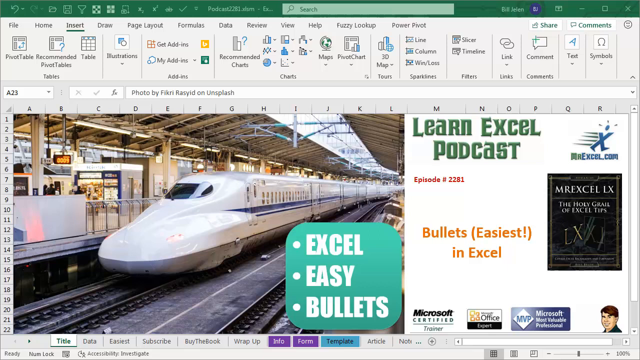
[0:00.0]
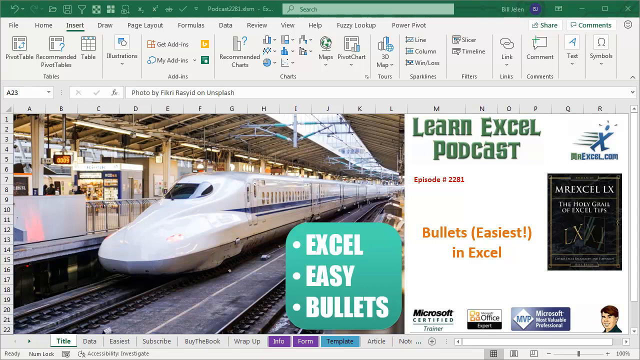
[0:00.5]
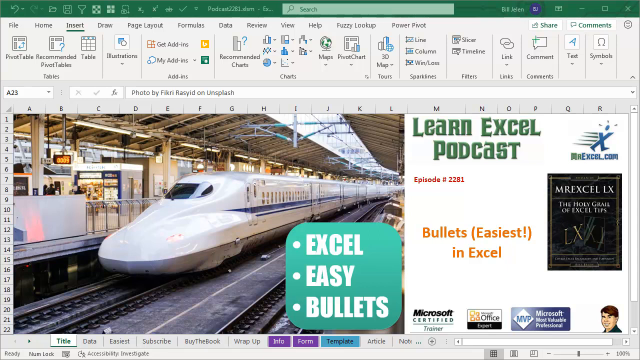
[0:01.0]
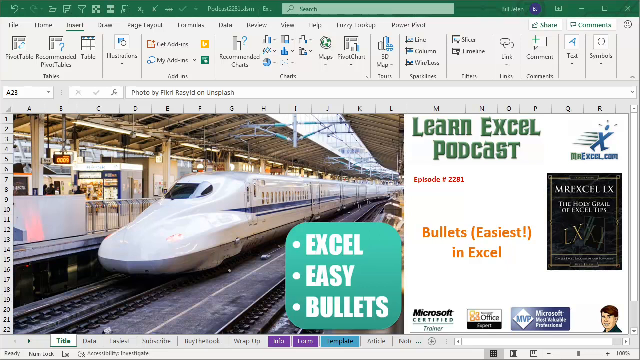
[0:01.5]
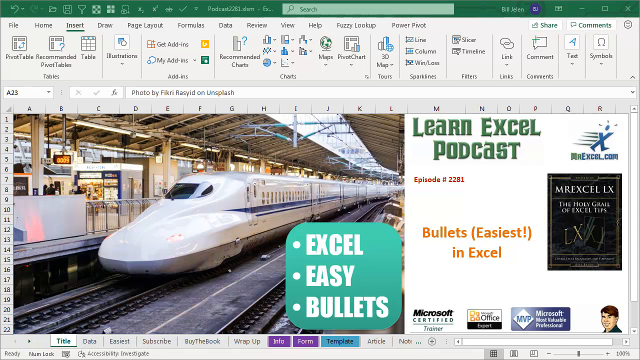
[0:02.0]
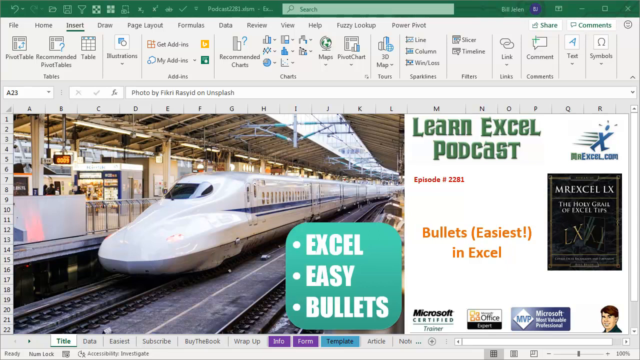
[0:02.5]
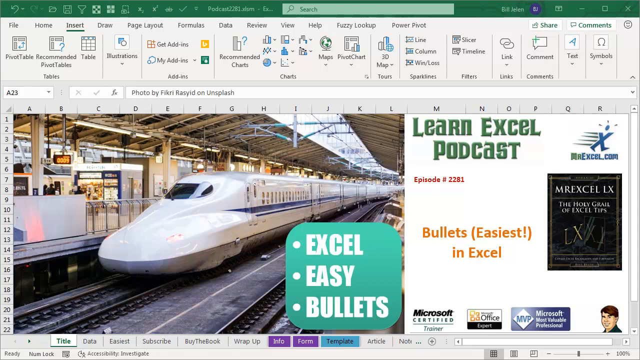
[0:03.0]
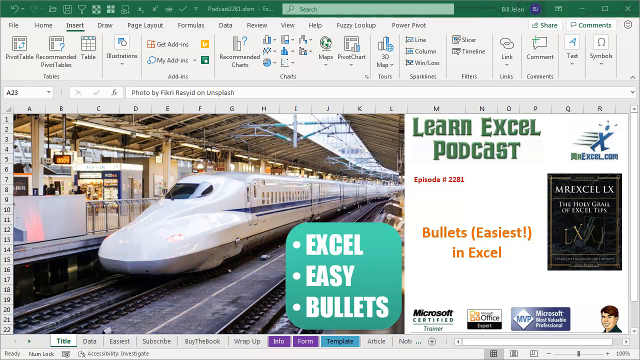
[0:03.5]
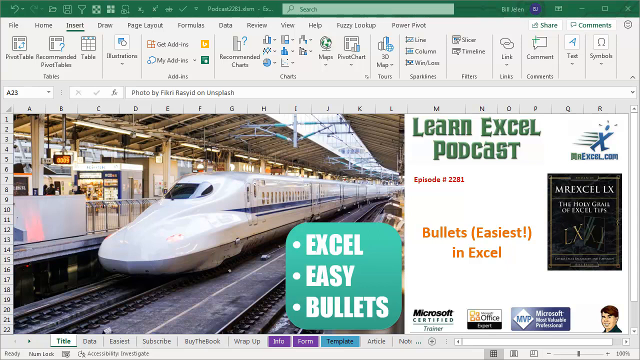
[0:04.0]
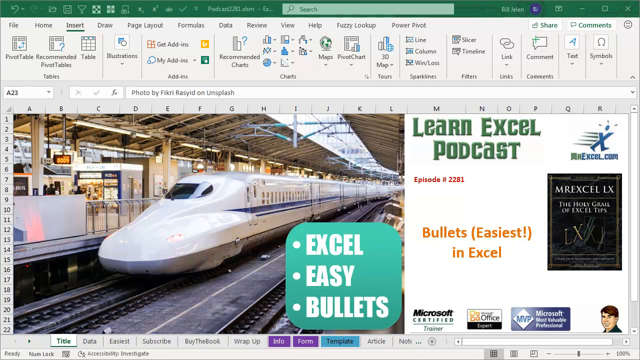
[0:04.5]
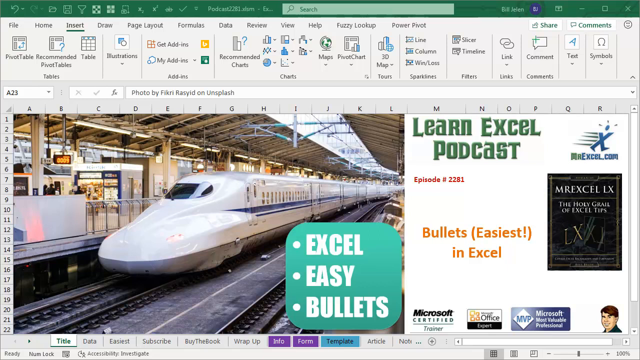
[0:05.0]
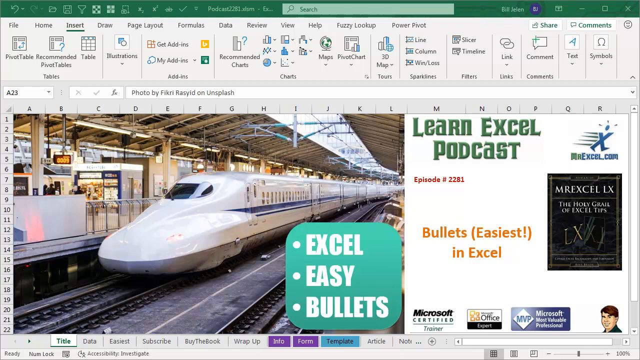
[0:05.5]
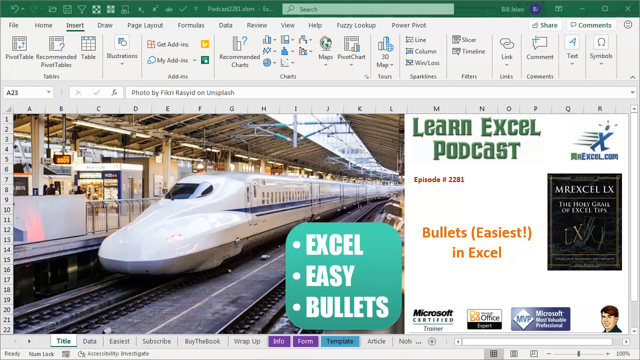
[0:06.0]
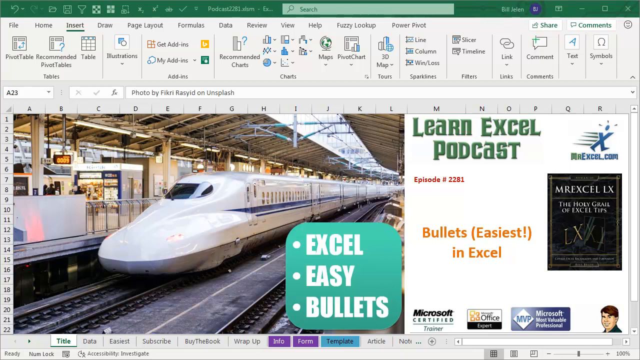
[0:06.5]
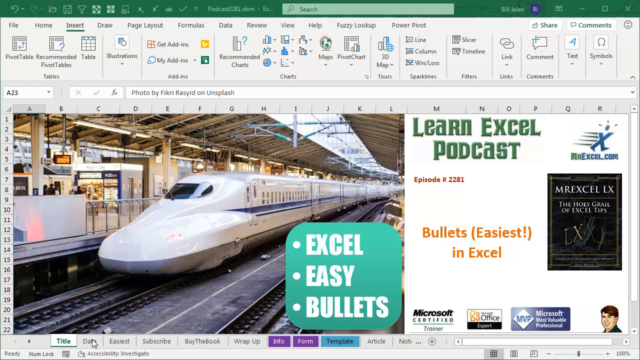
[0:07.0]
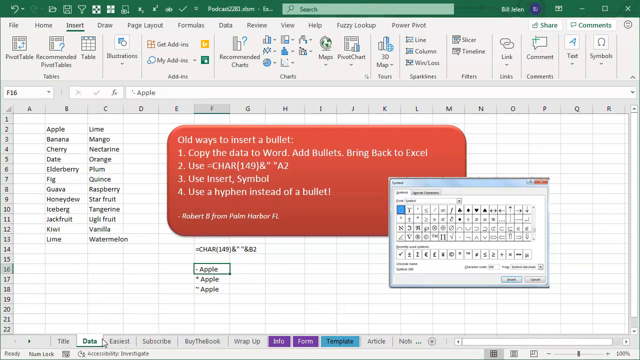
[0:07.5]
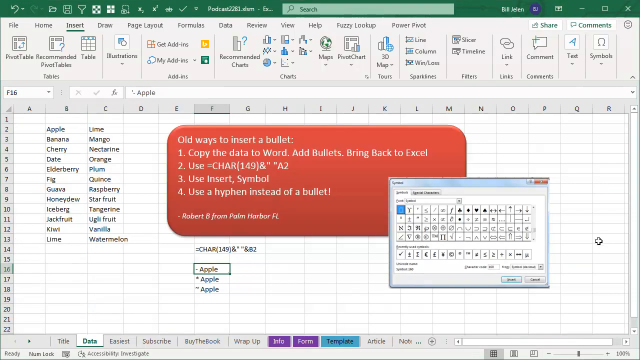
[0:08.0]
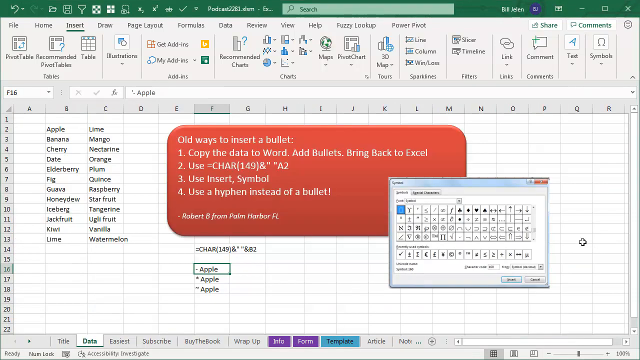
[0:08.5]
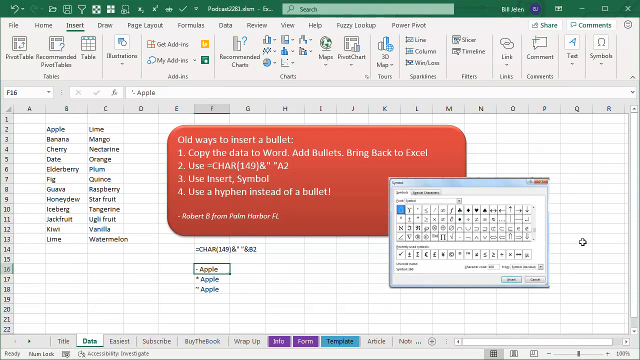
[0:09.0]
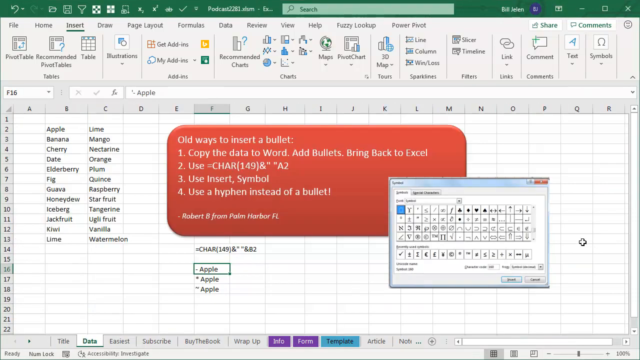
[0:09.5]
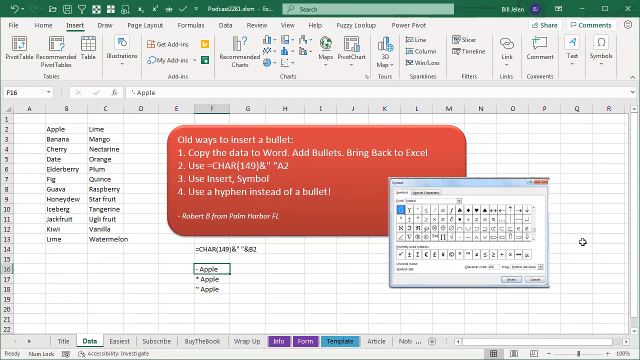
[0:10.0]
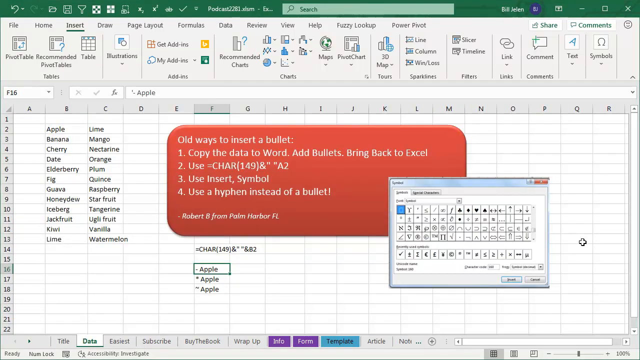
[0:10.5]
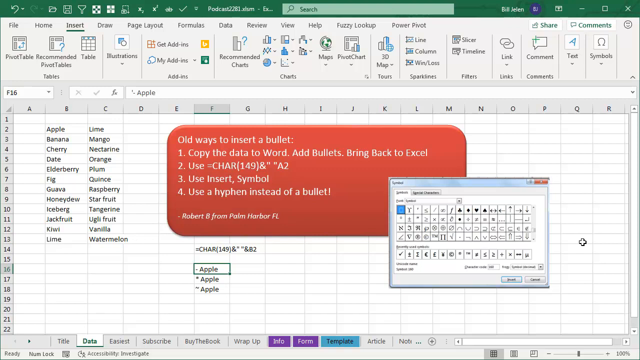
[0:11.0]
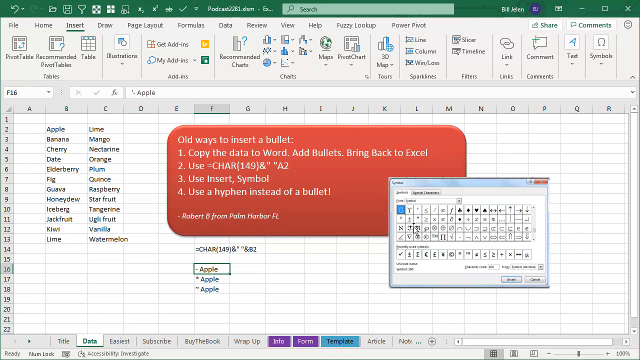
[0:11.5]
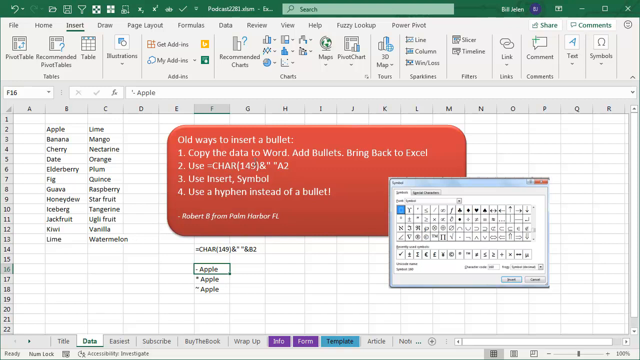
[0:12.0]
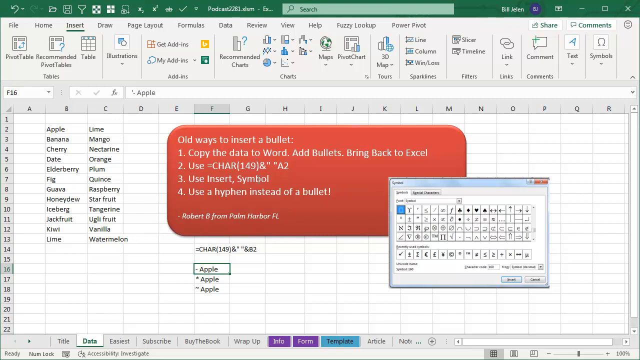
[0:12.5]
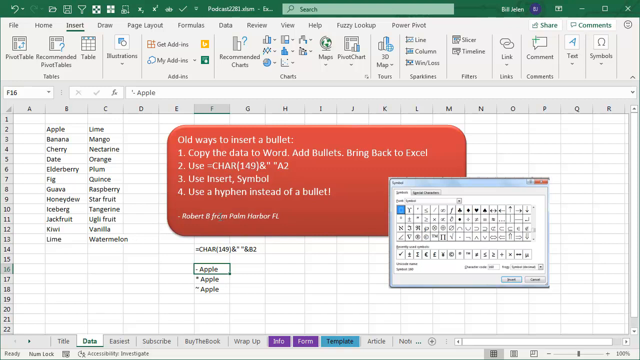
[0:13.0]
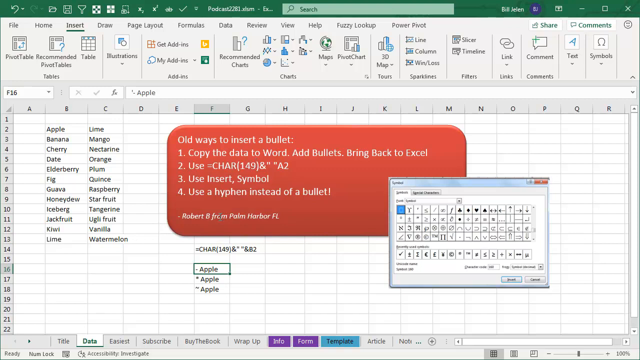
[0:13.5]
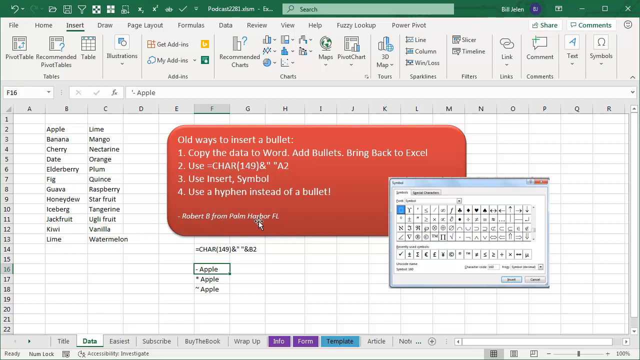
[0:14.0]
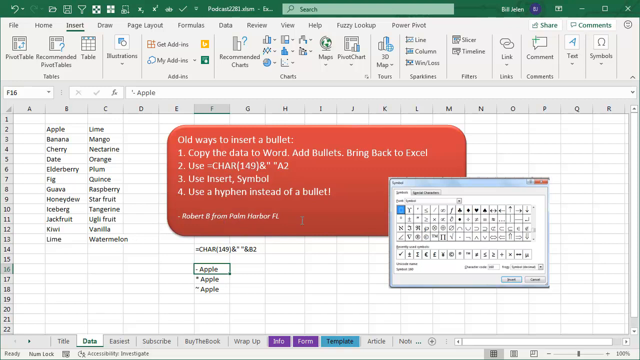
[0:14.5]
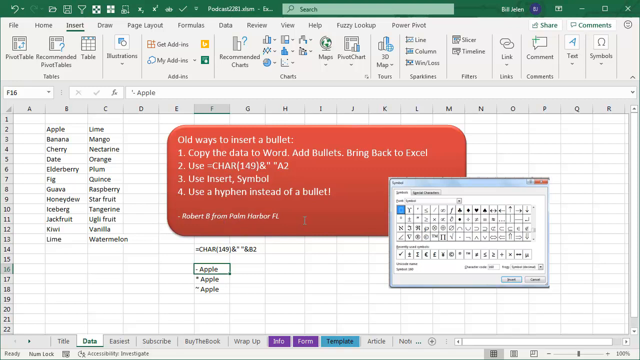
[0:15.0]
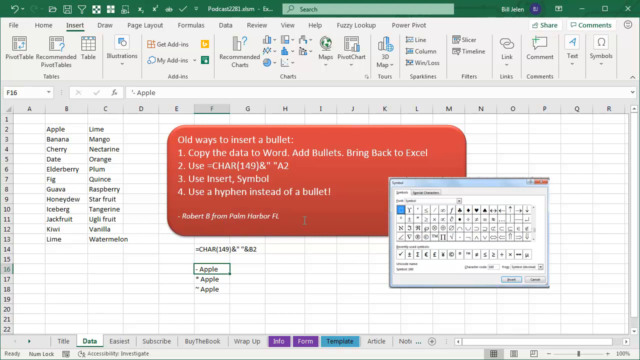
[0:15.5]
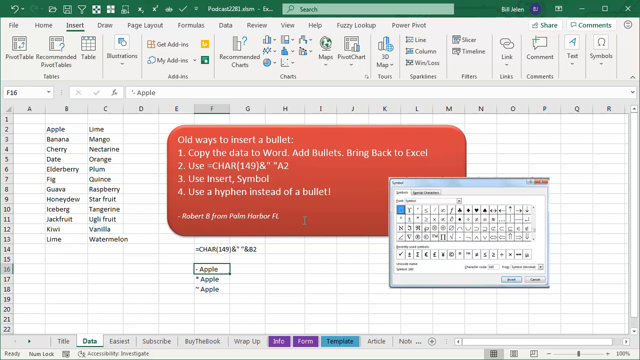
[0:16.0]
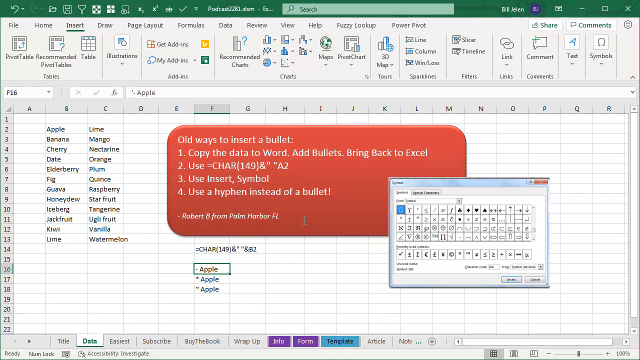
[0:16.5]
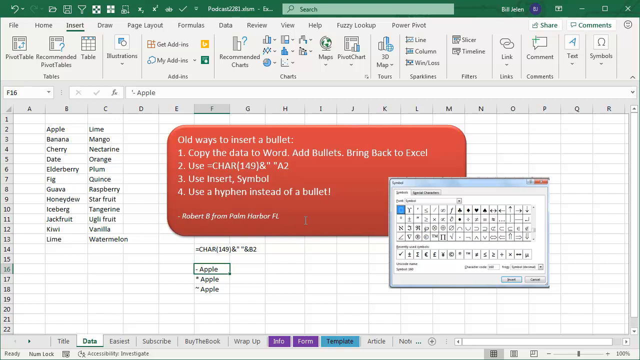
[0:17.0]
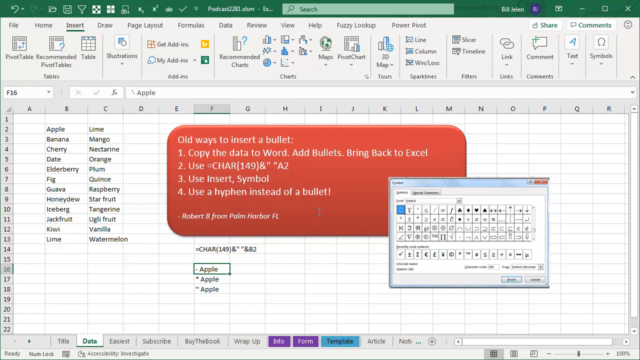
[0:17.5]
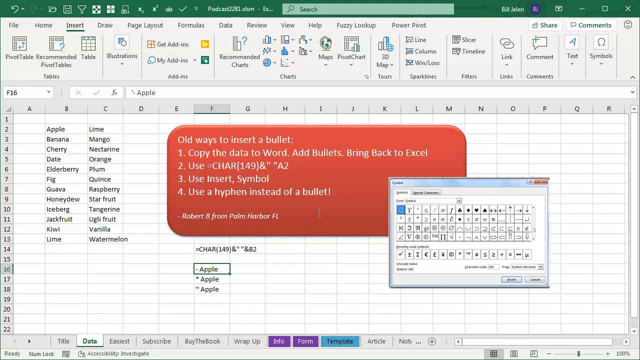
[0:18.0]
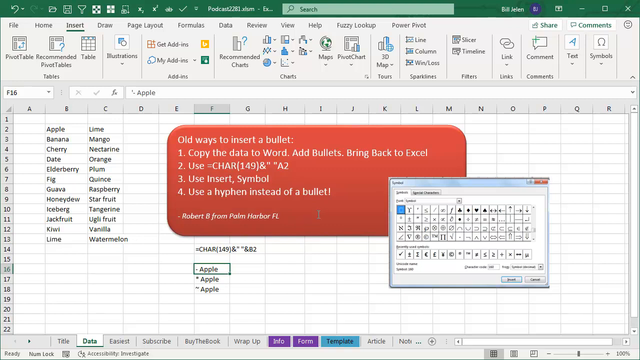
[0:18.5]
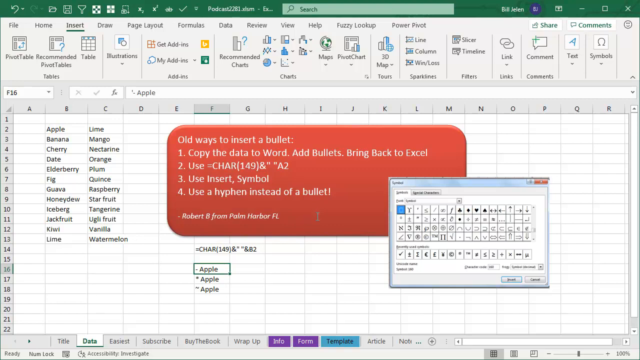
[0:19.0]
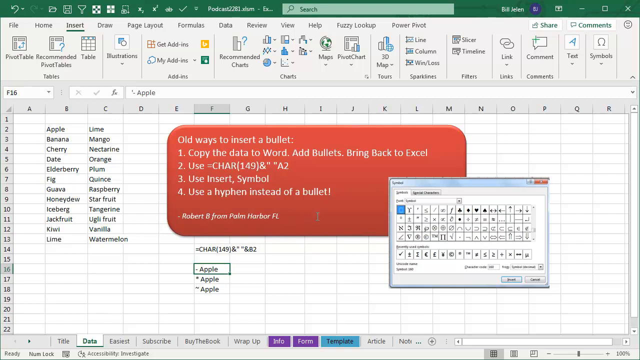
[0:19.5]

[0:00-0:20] The video opens on a website that apparently relates to bullet trains; it shows the word "bullet" with a bullet train. After a couple of seconds, a spreadsheet that looks like Excel appears, with a number of food-item words on it such as cherry, banana, apple and star fruit. An instruction box on the spreadsheet covers old ways to insert a bullet and gives Excel instructions. A mouse cursor moves across the instruction bubble; it looks like someone is recording themselves working in the spreadsheet, moving the mouse around.